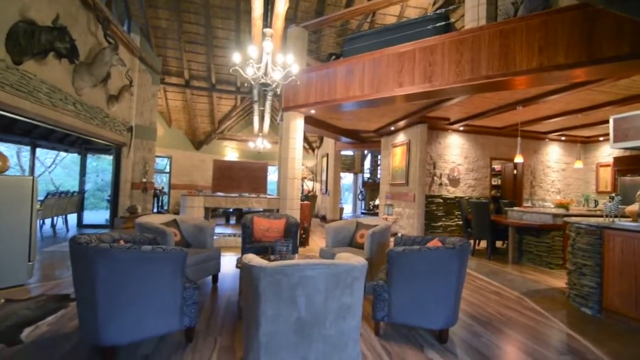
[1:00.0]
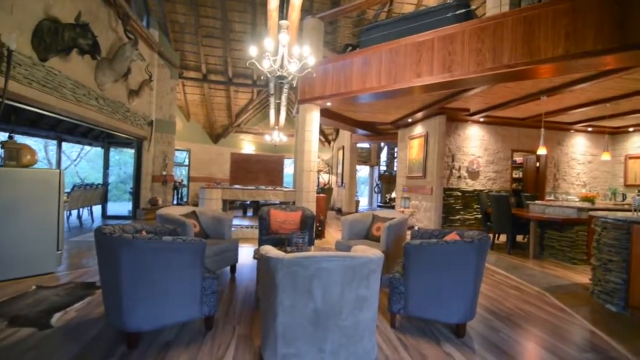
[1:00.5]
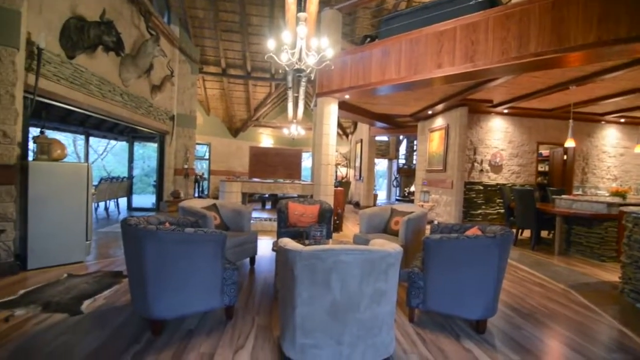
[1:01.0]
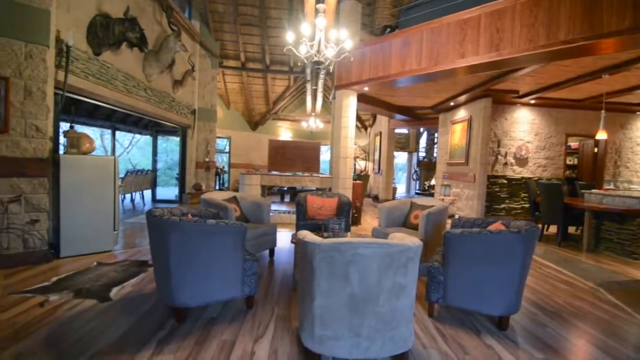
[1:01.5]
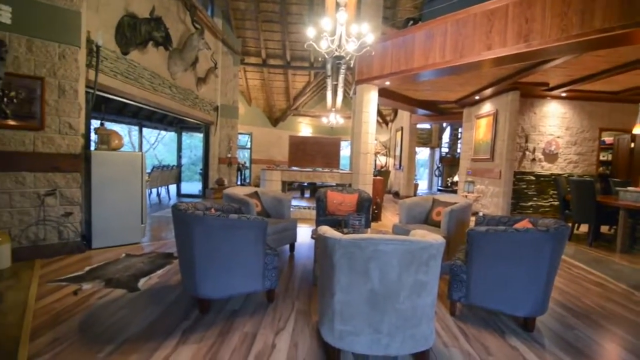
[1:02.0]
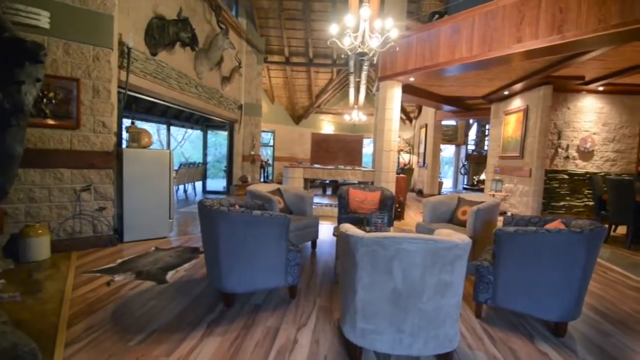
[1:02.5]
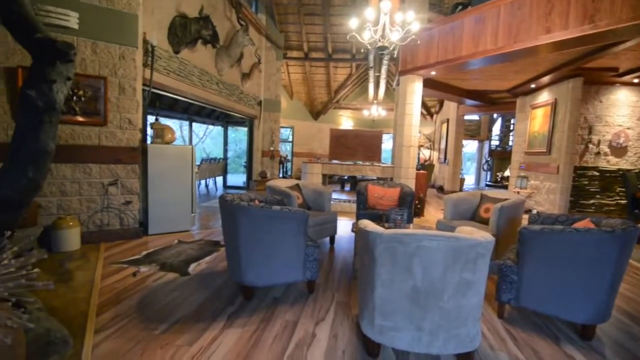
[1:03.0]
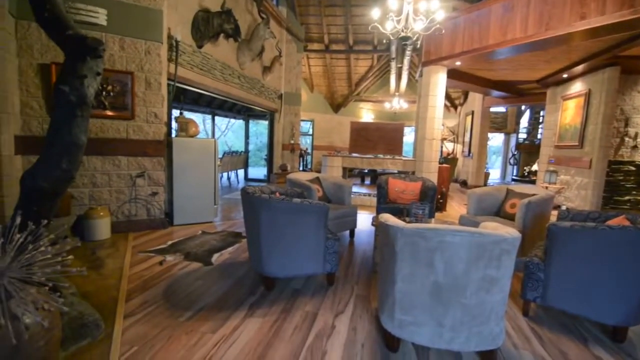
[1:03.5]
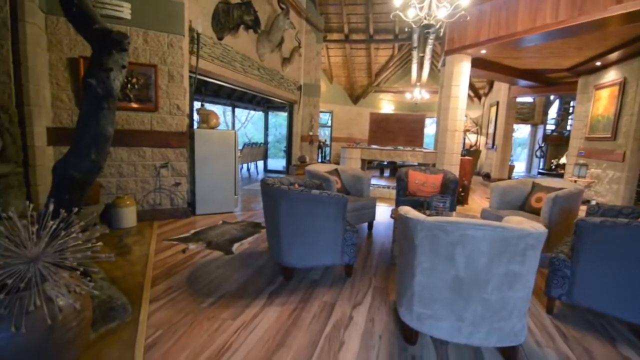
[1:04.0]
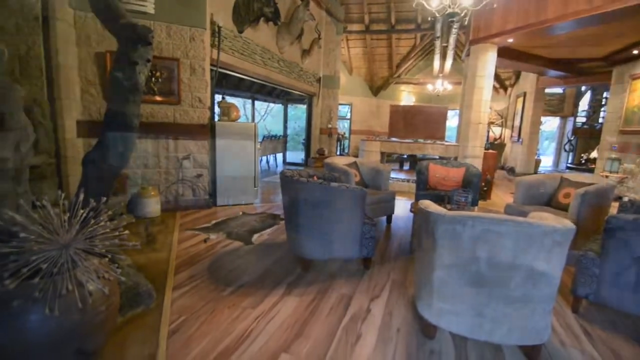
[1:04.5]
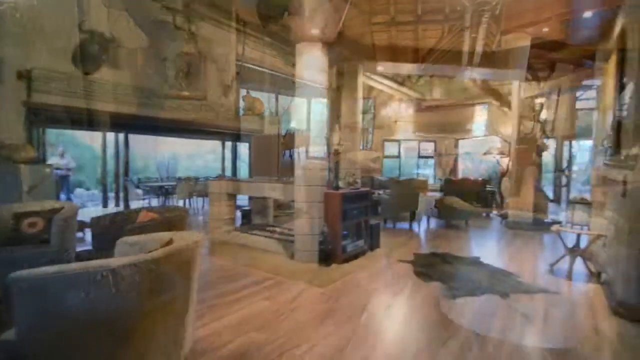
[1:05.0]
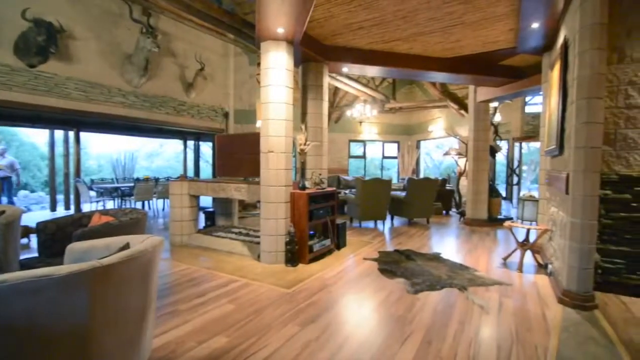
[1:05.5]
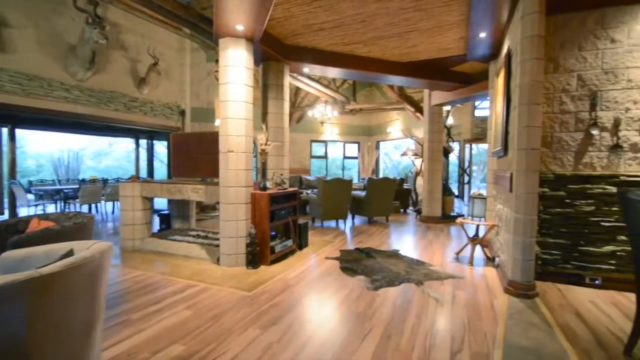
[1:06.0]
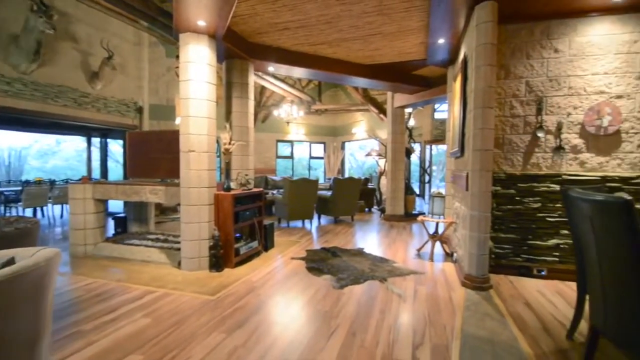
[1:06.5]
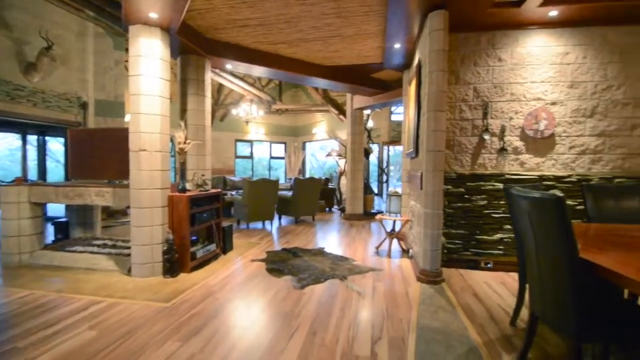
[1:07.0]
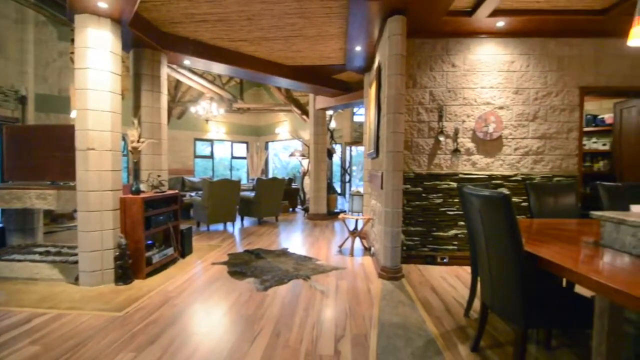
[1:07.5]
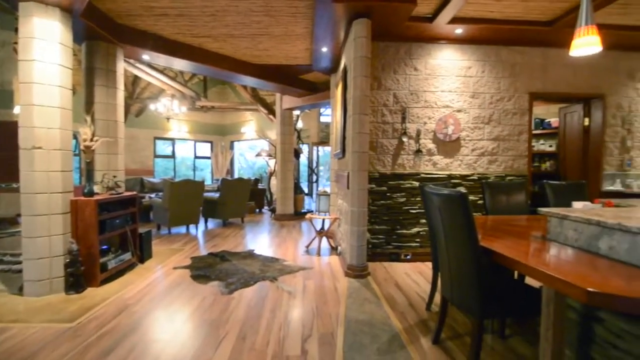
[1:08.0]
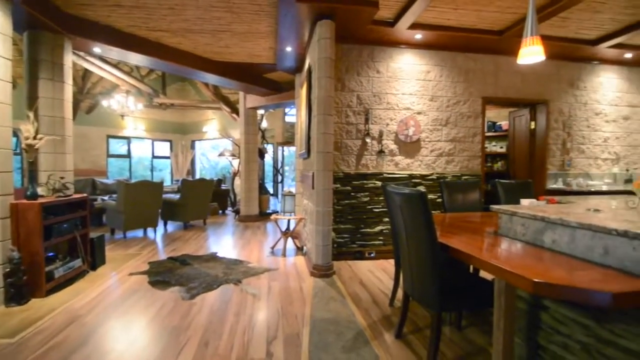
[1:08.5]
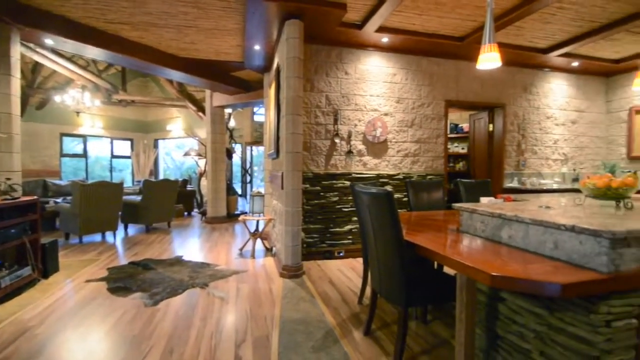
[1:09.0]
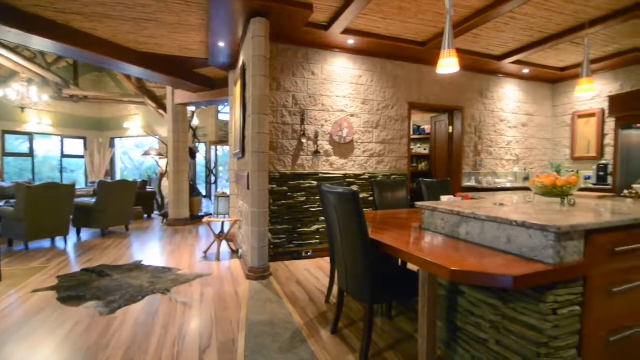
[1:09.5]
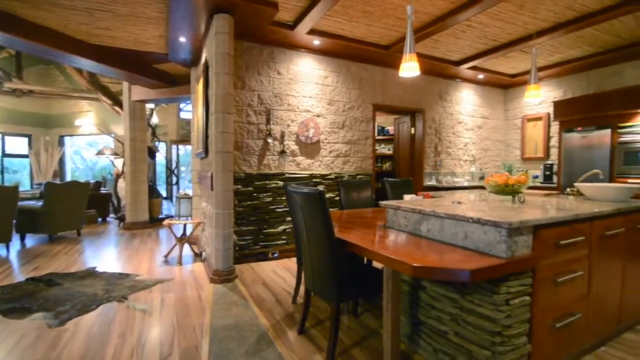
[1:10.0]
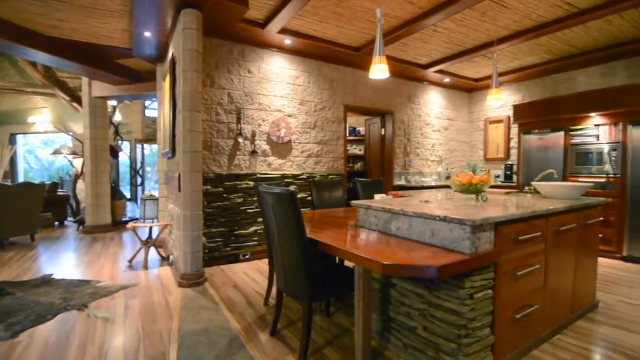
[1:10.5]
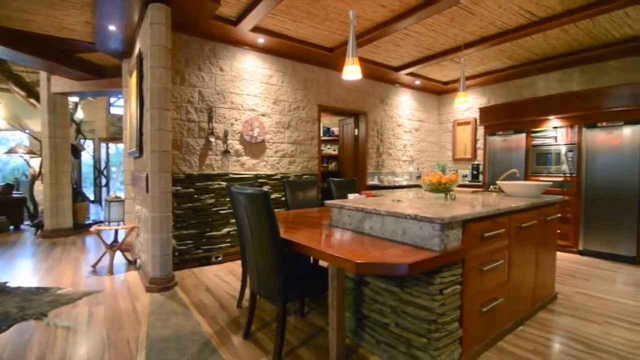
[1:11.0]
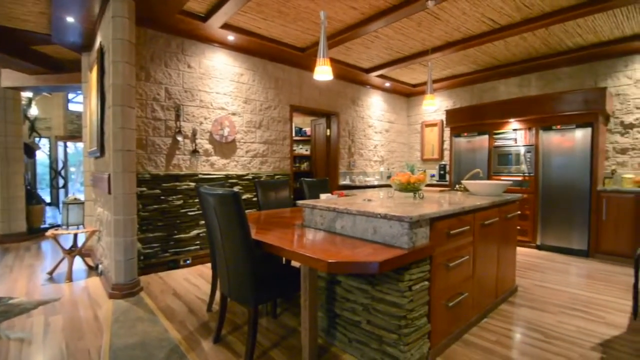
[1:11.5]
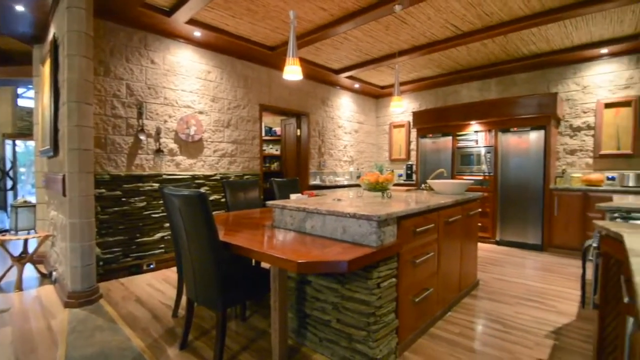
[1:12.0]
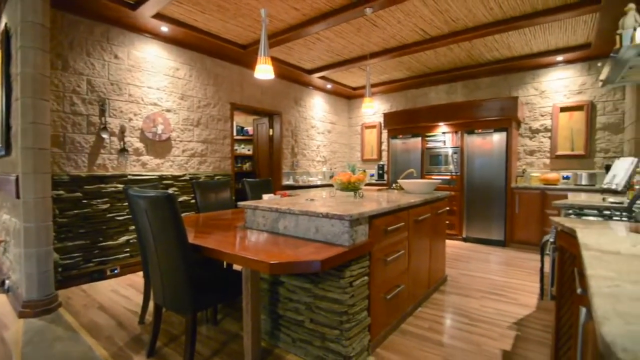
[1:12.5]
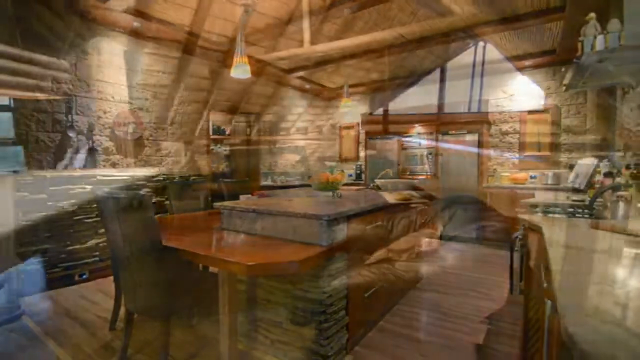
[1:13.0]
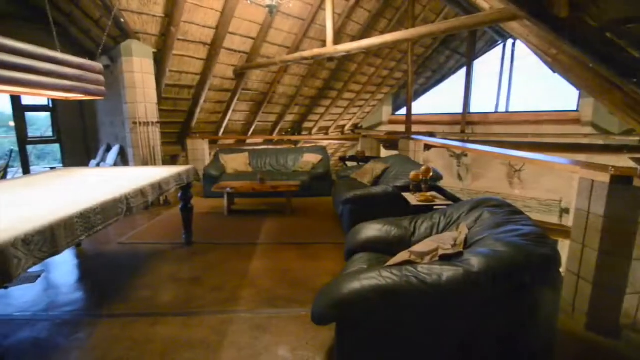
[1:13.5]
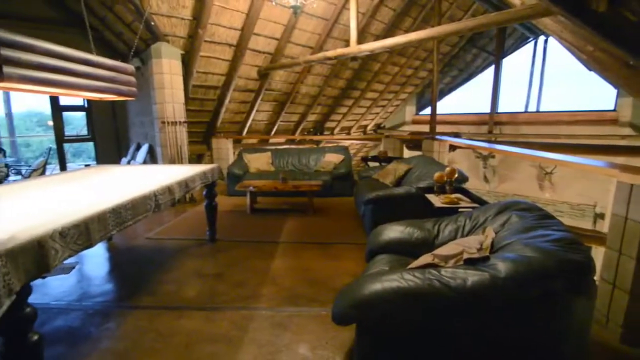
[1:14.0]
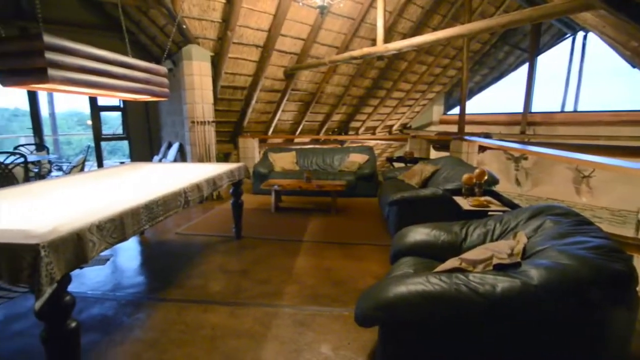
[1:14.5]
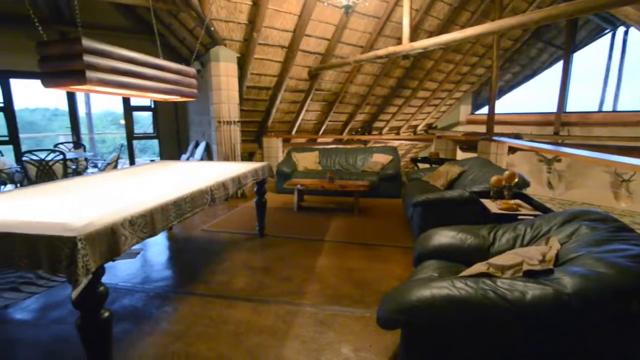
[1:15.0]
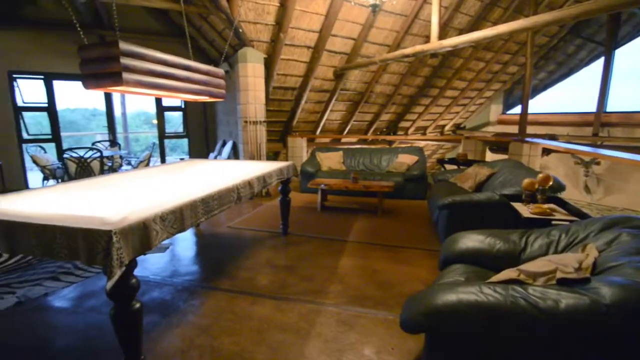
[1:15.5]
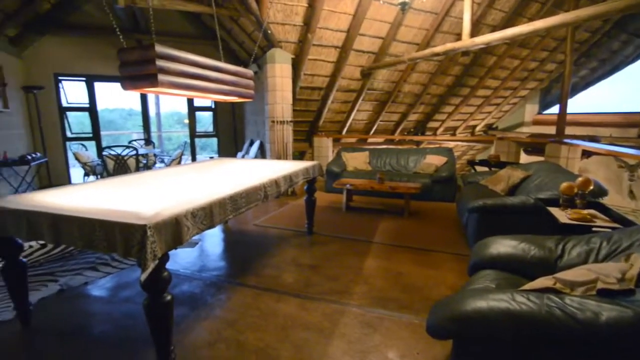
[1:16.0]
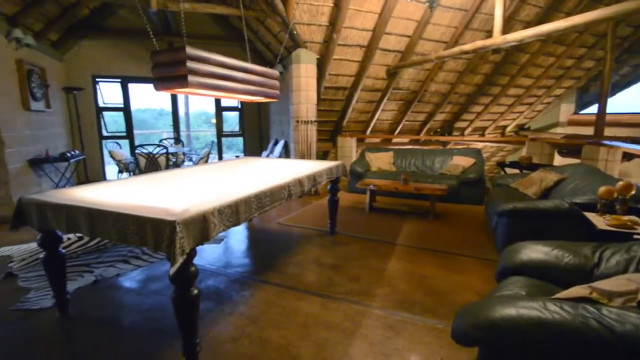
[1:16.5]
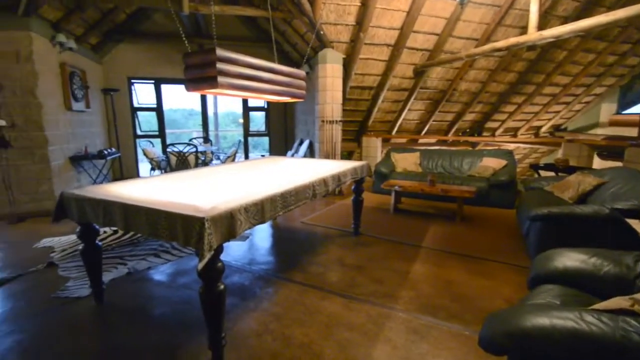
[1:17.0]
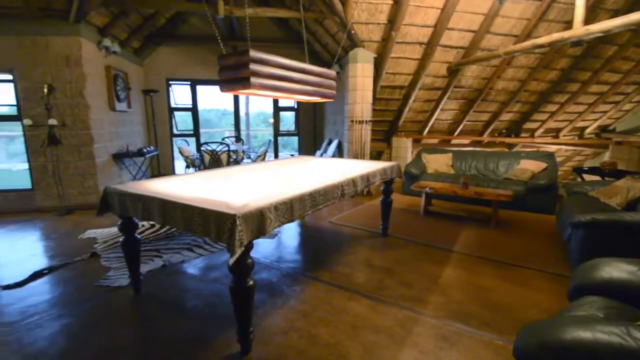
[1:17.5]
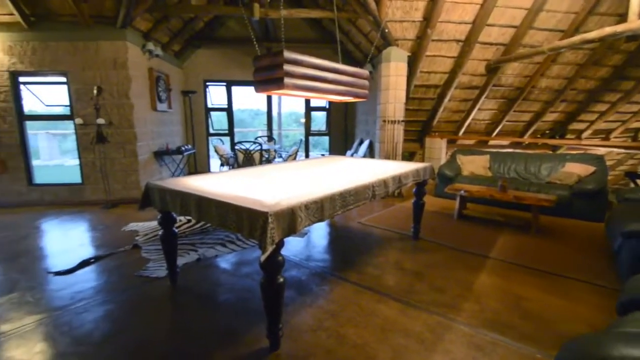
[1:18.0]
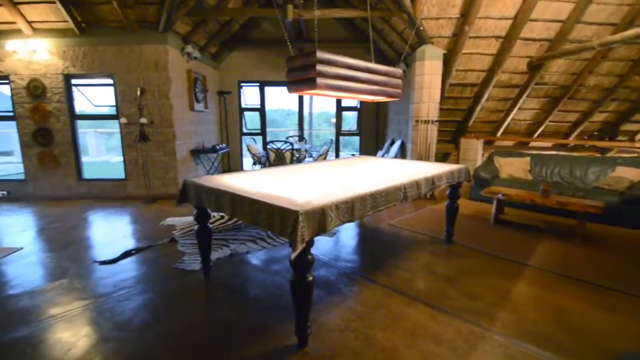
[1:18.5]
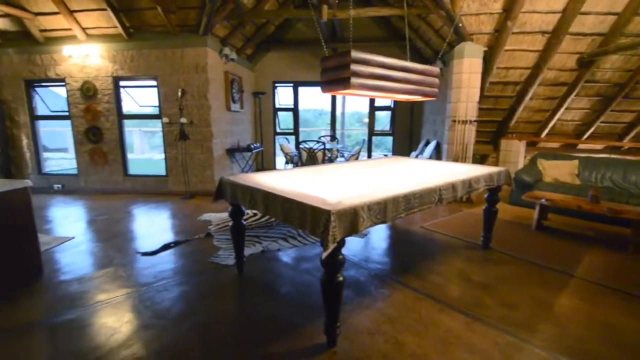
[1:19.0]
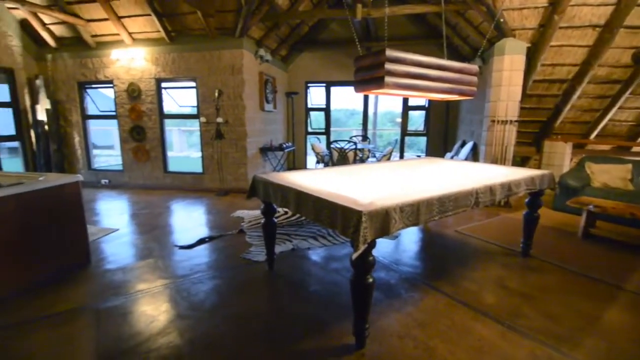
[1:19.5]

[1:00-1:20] The house is decorated with many furnishings, including a bear rug on the hardwood floors. With the open floor plan, the view pans quickly from the kitchen to the family room to the living room. There is a billiards table, and mounted animal heads are on the wall. There are lights everywhere: hanging lights, lights over the pictures on the wall, and a hanging light above the billiards table. The wall to the kitchen looks like a rustic stone wall. The ceiling beams are visible, and part of the upstairs can be seen from the downstairs. The house is decorated mostly in earth tones. There are no people present; the house is empty. There is a stainless steel refrigerator. The billiards table looks like it is on the second level.